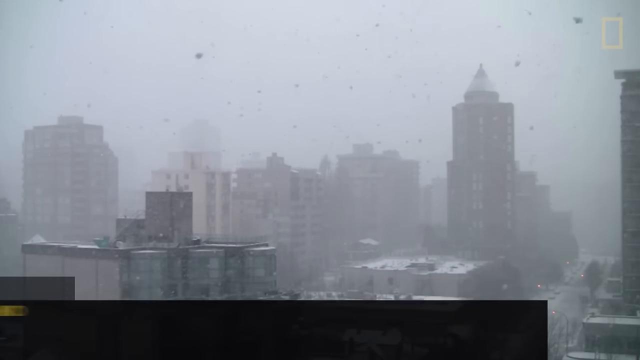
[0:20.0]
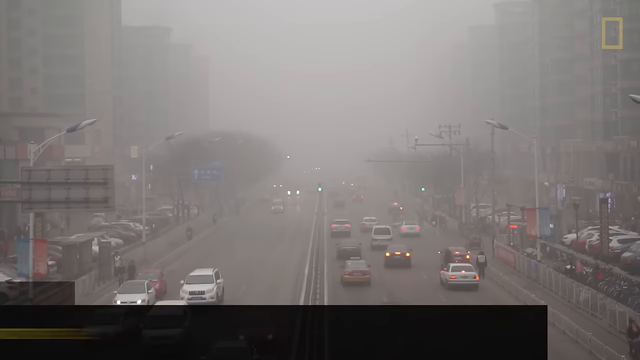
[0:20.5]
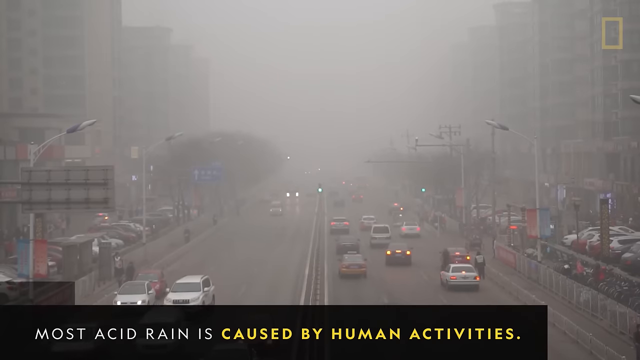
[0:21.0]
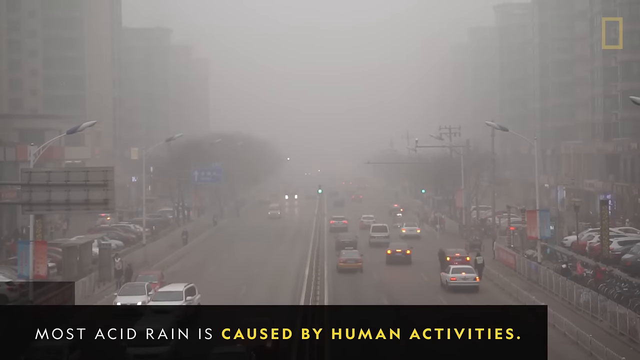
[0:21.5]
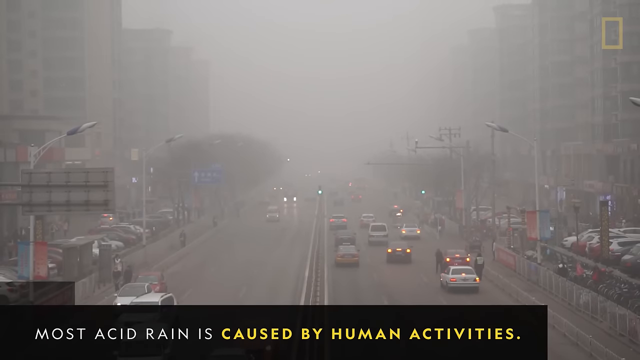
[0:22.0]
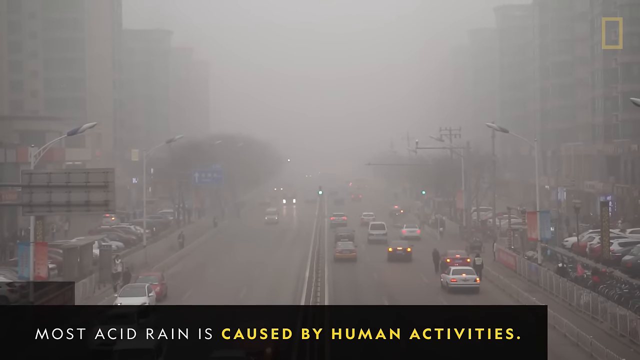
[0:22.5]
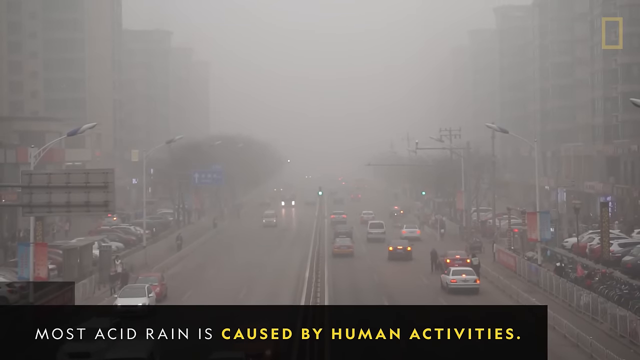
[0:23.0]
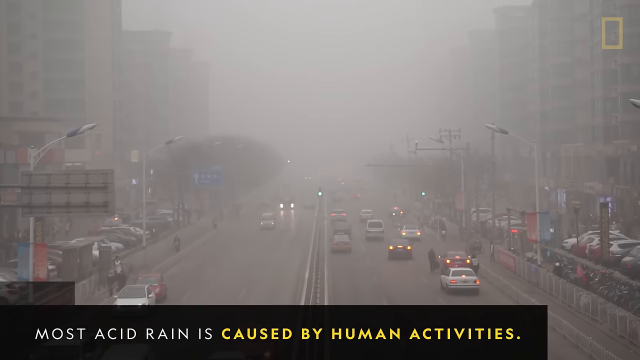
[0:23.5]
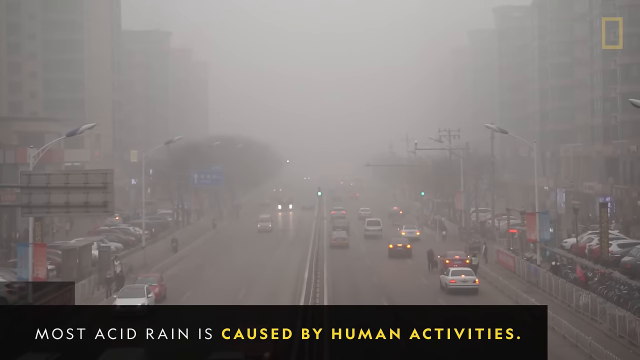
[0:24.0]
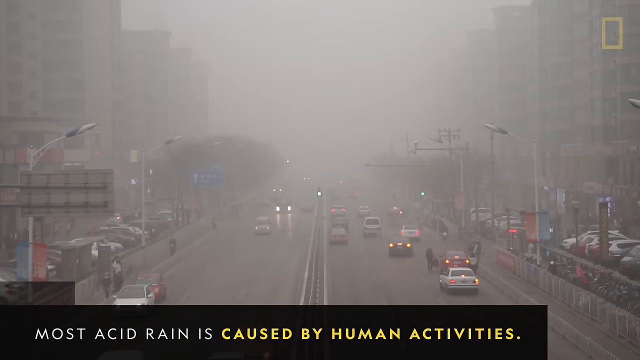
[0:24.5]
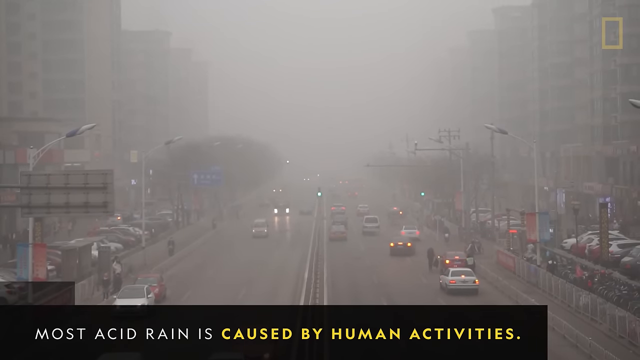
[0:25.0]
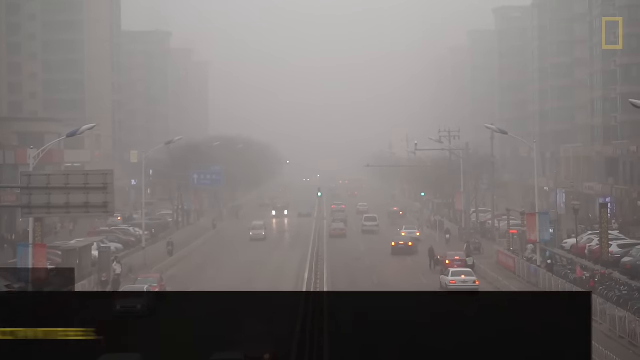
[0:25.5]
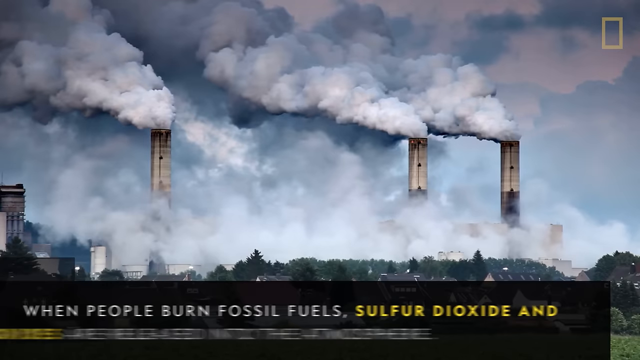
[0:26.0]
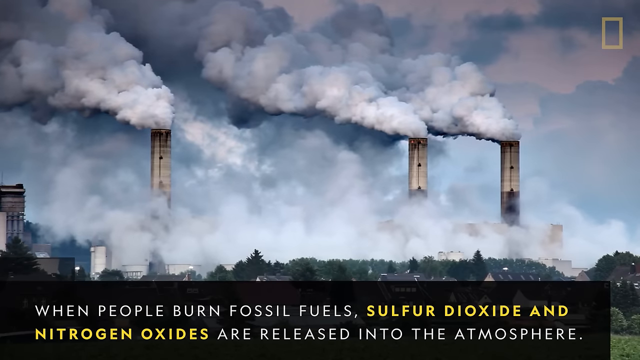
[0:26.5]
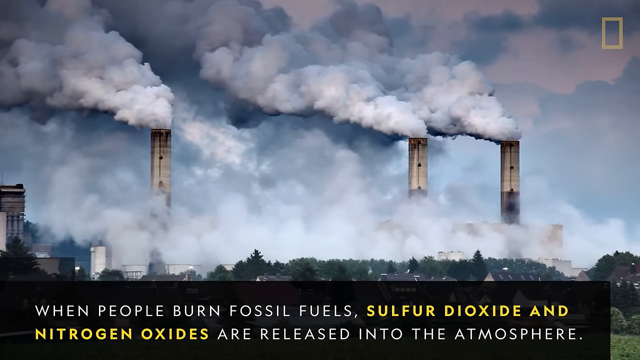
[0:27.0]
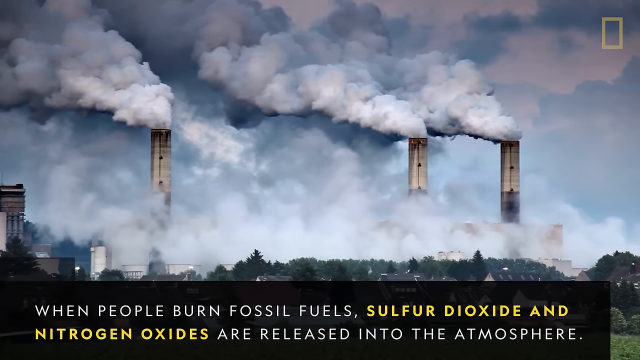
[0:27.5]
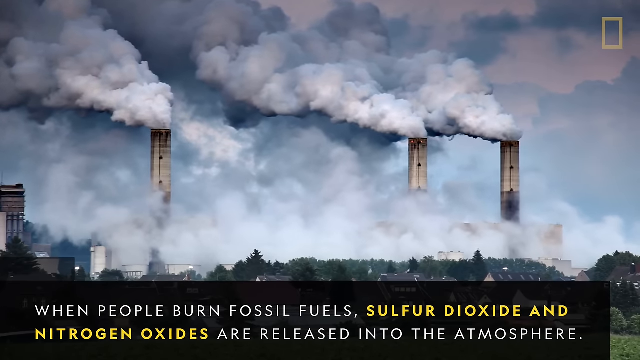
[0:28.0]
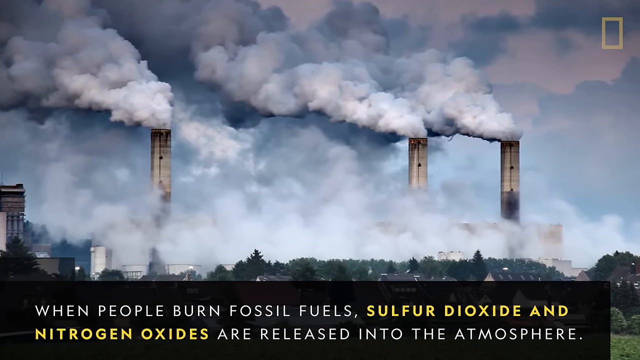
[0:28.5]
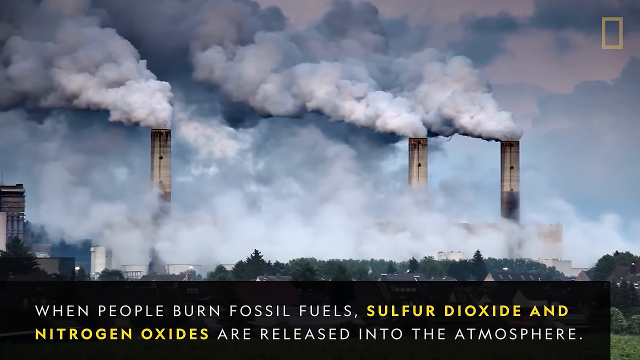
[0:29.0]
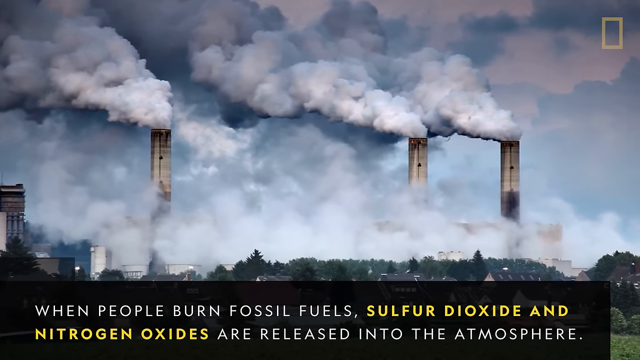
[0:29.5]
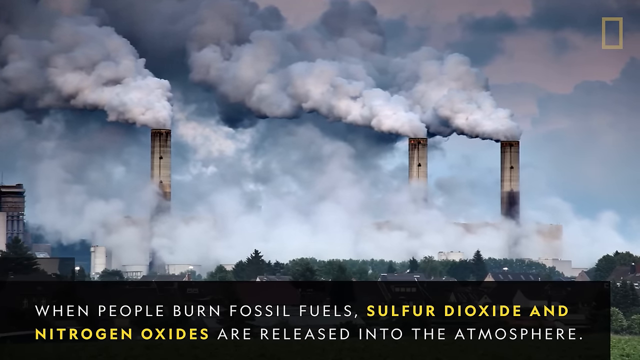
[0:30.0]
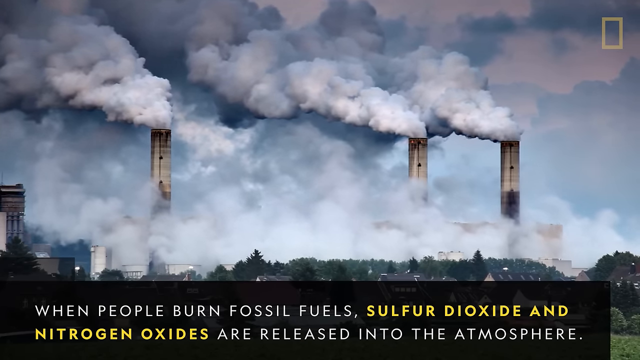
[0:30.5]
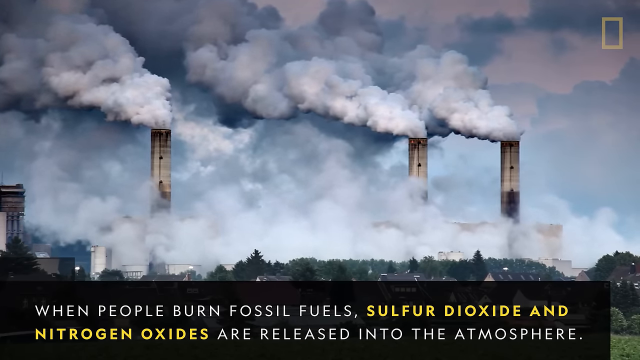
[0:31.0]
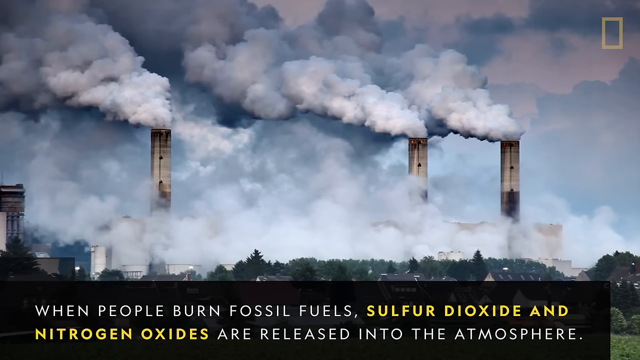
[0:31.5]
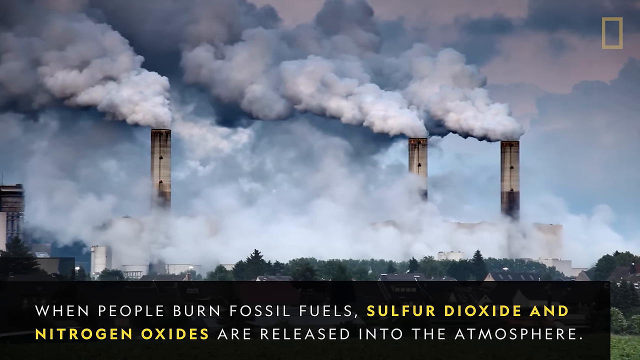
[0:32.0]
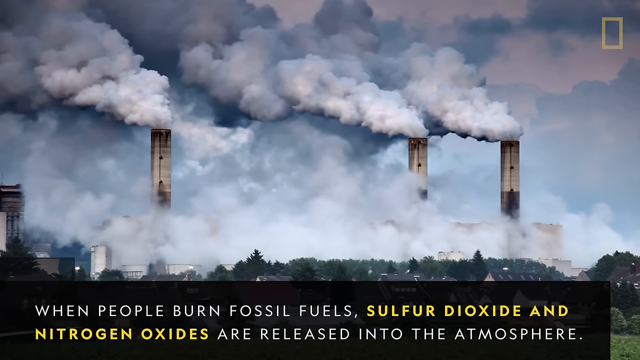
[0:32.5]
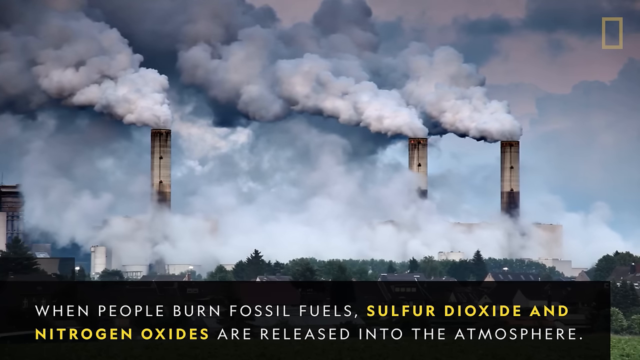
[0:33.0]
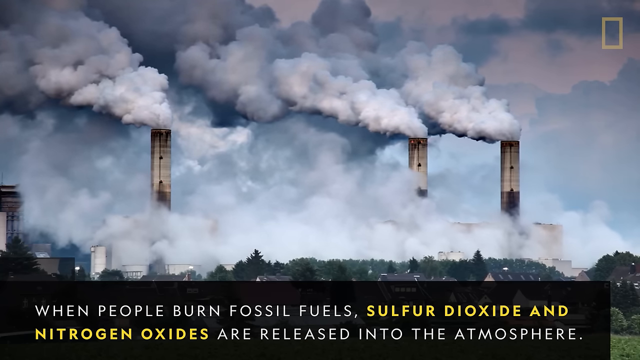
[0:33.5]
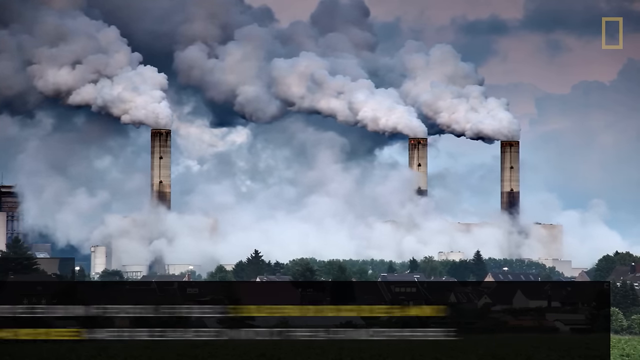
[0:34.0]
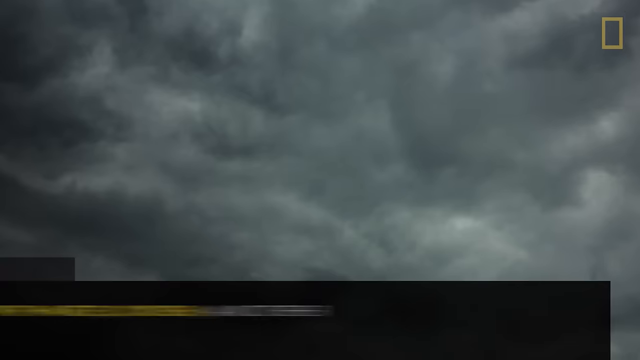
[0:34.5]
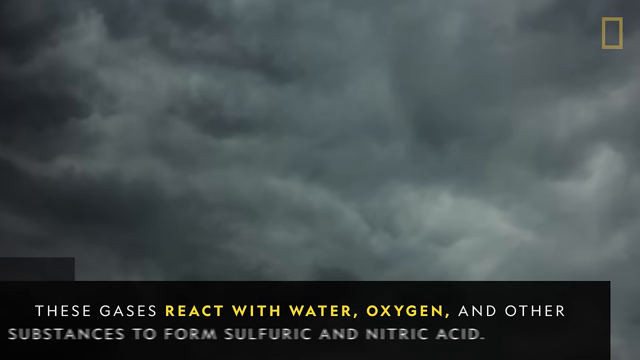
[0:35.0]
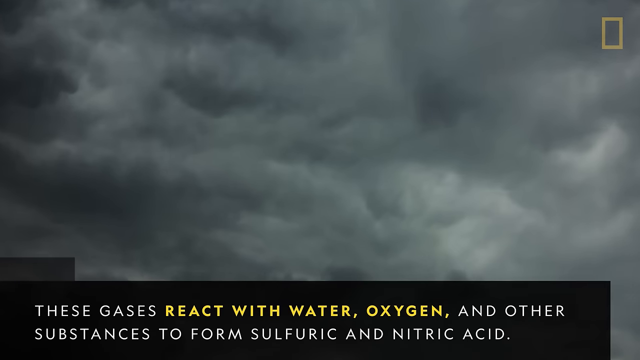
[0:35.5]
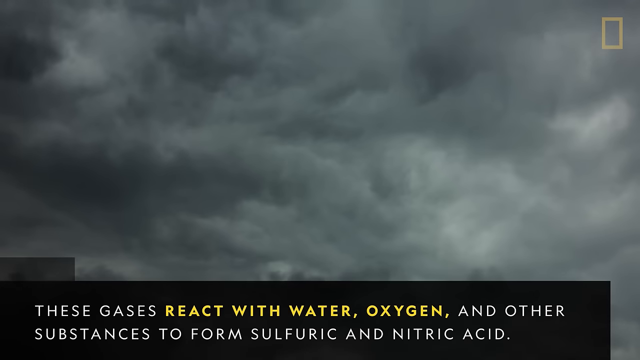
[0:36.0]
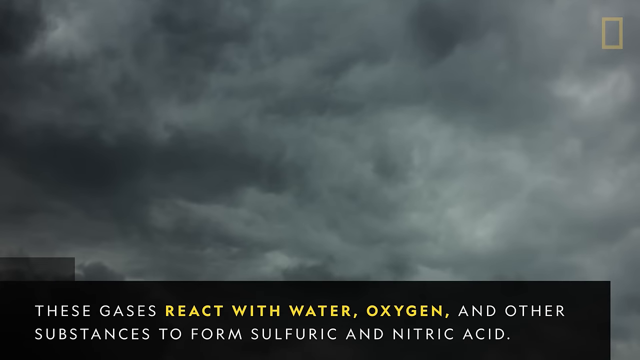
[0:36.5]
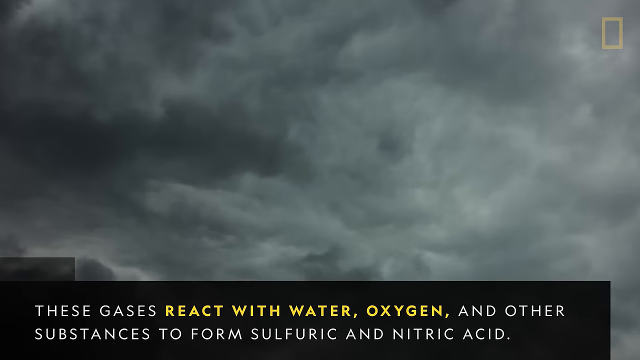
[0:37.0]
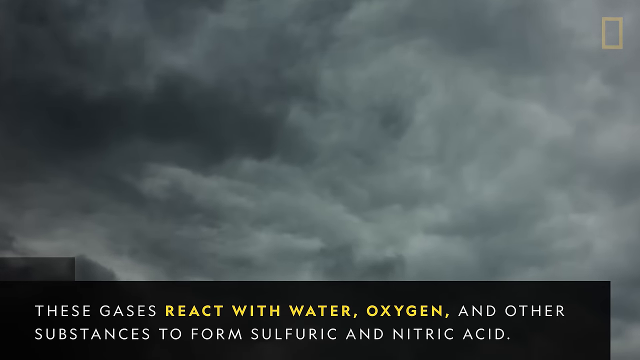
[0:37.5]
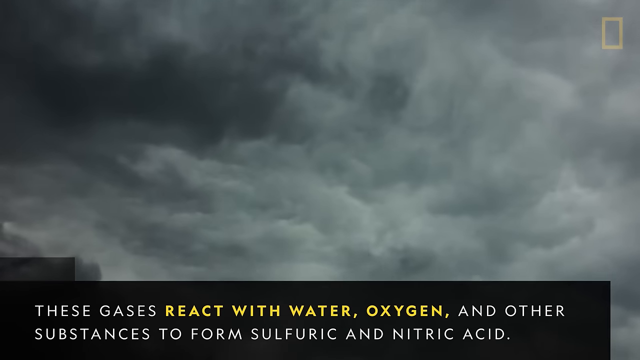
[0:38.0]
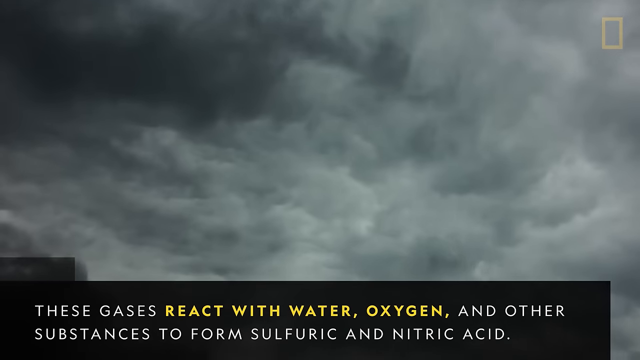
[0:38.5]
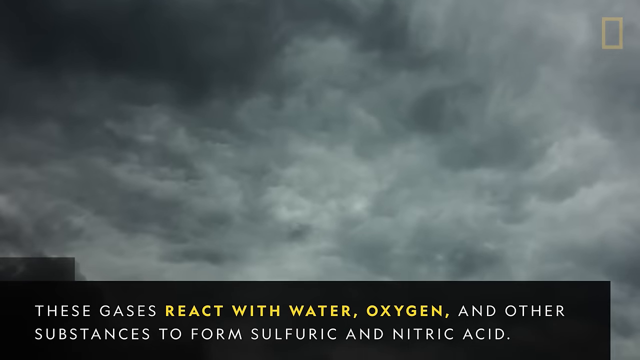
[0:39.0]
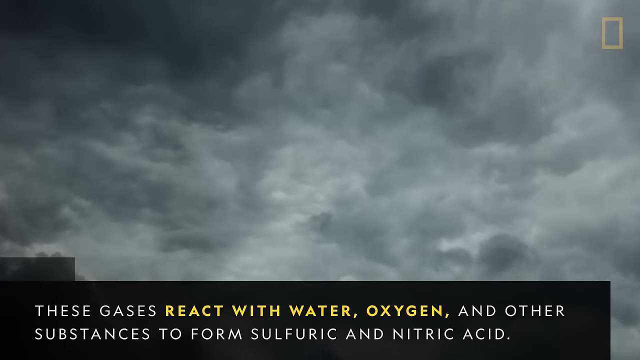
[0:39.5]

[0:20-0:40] Smokestacks release smog or pollutants into the air. A written description covers how acid rain forms when certain gases interact with water and oxygen, apparently to form sulfuric acid, and that acid rain is caused by human activities. No people are visible. The setting is an urban environment, shown with a description of acid rain and its supposed impact there.